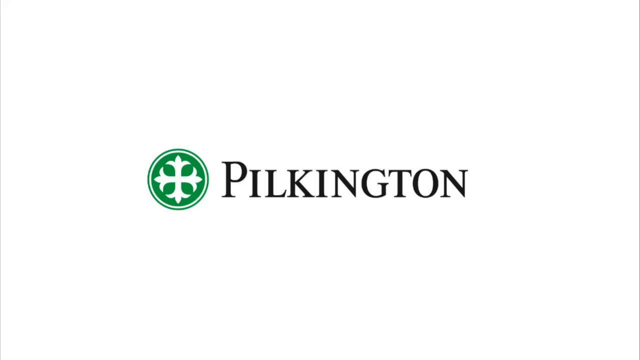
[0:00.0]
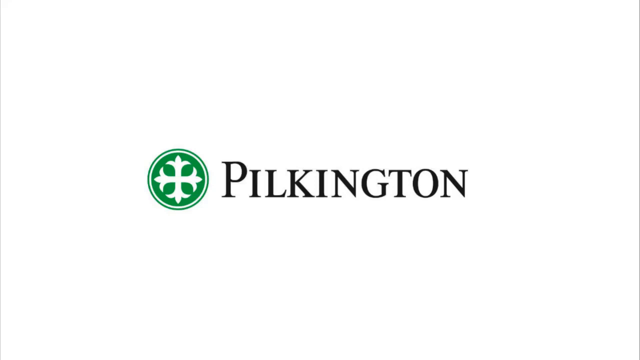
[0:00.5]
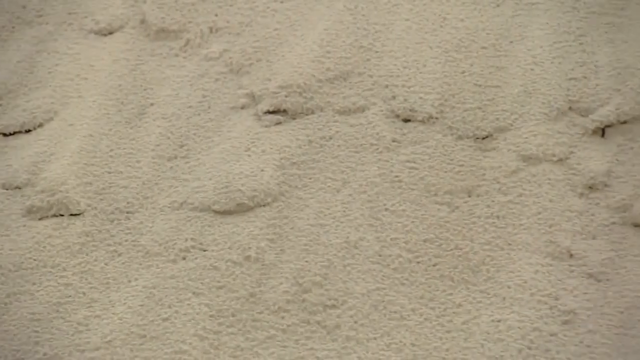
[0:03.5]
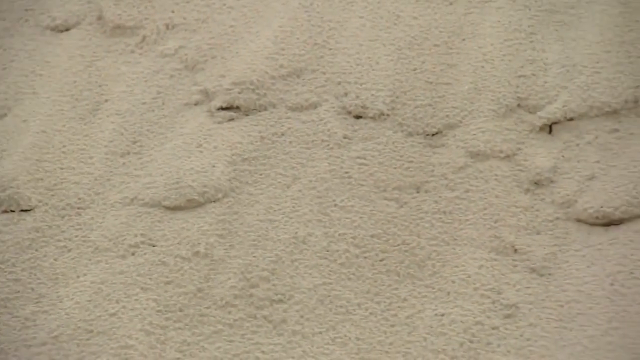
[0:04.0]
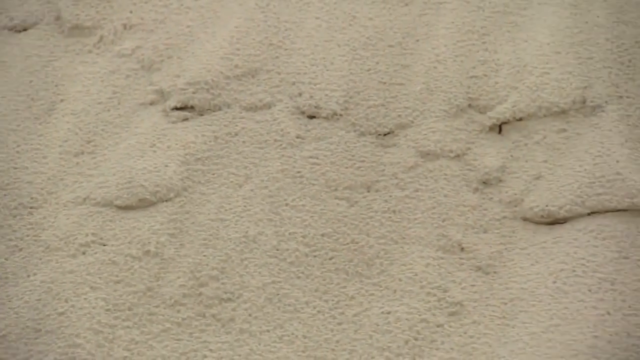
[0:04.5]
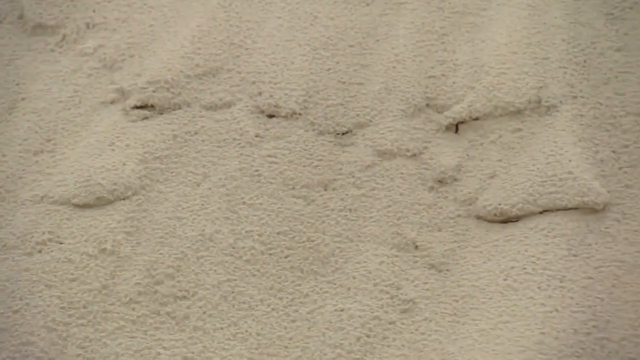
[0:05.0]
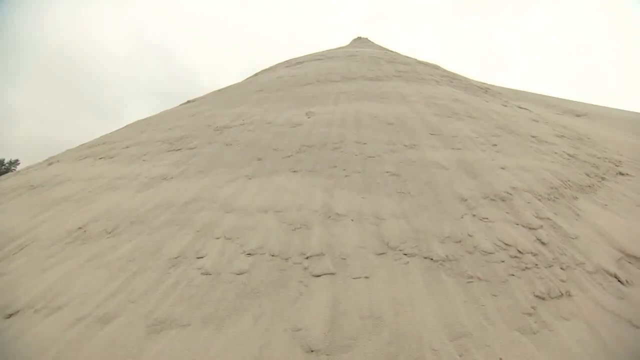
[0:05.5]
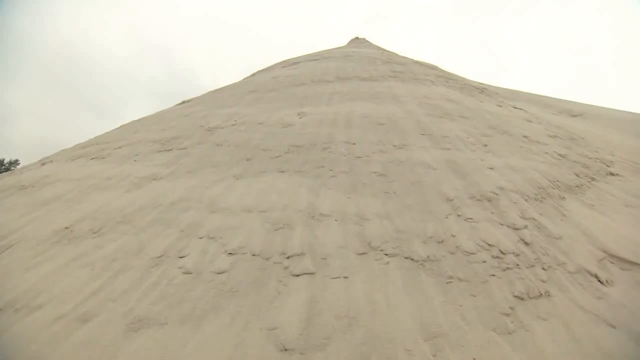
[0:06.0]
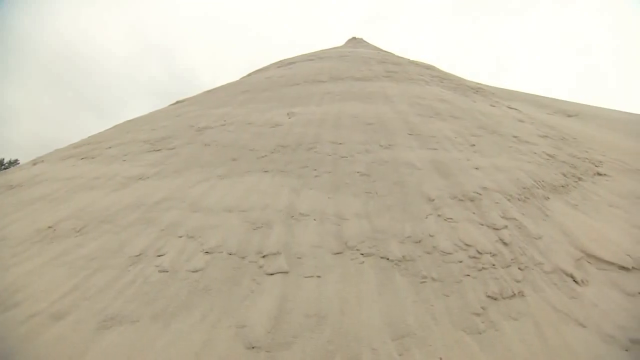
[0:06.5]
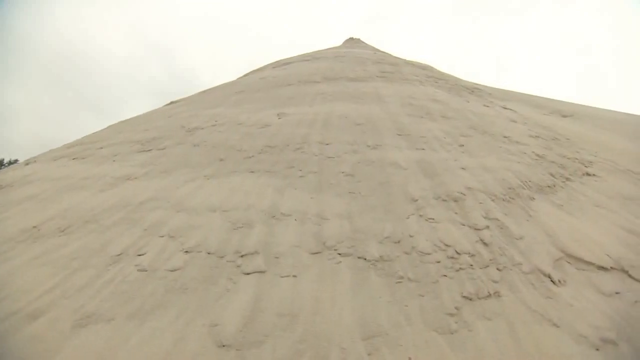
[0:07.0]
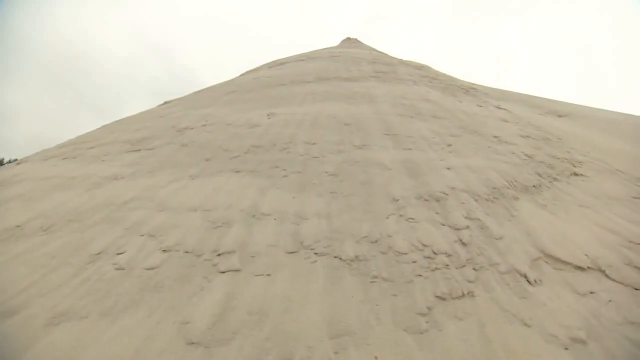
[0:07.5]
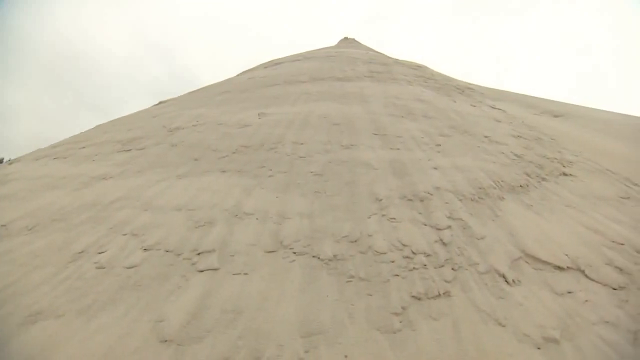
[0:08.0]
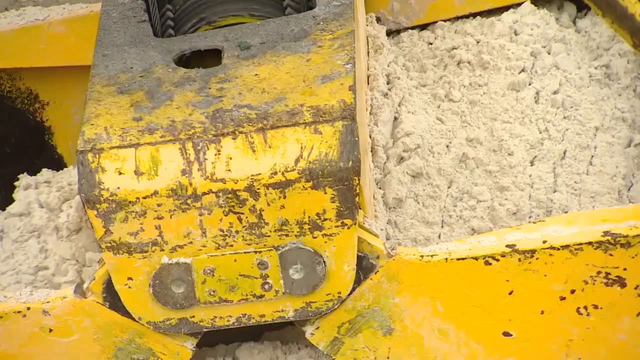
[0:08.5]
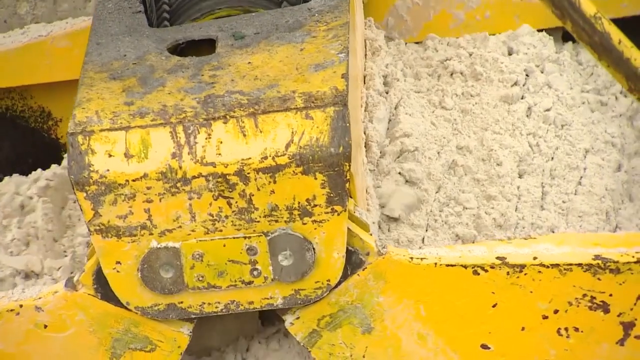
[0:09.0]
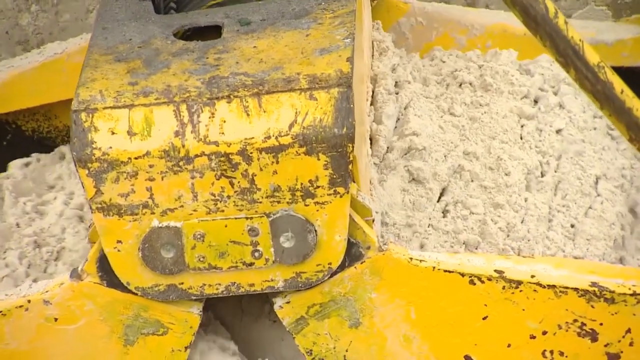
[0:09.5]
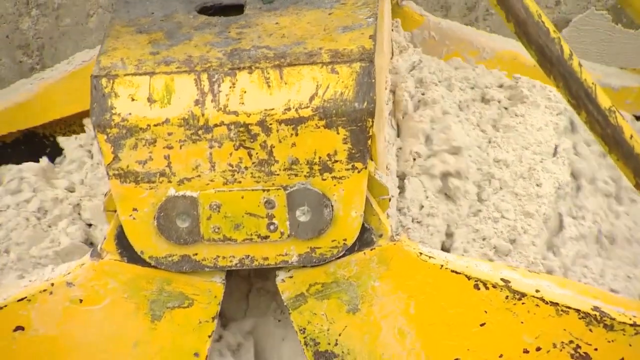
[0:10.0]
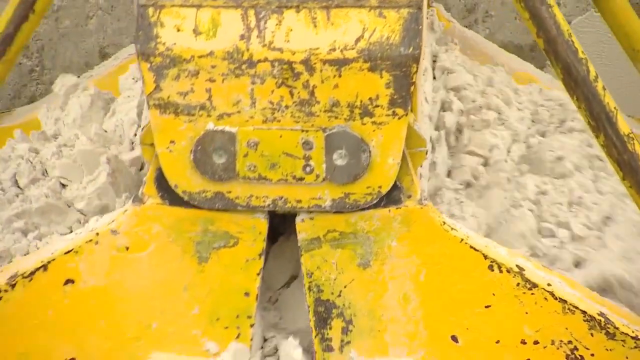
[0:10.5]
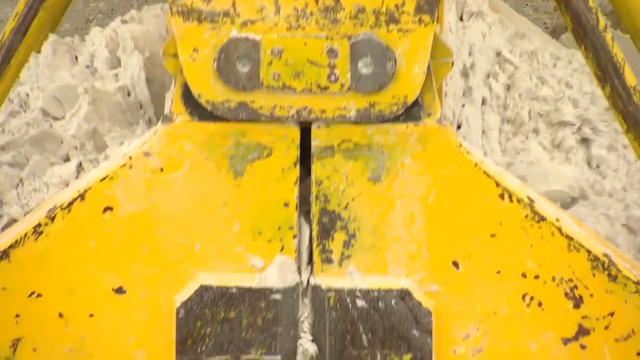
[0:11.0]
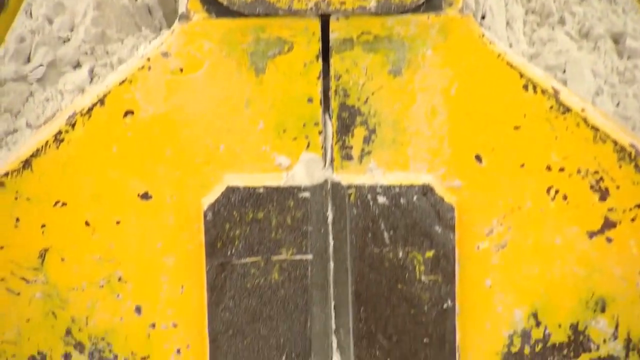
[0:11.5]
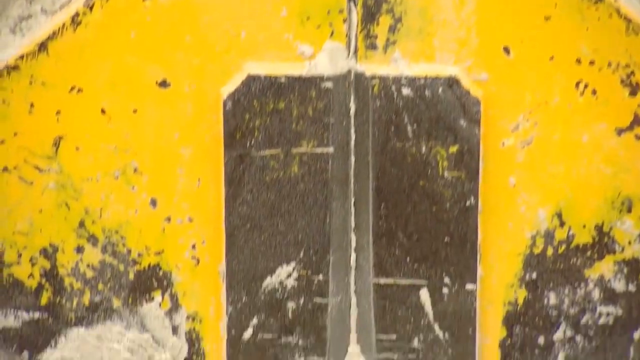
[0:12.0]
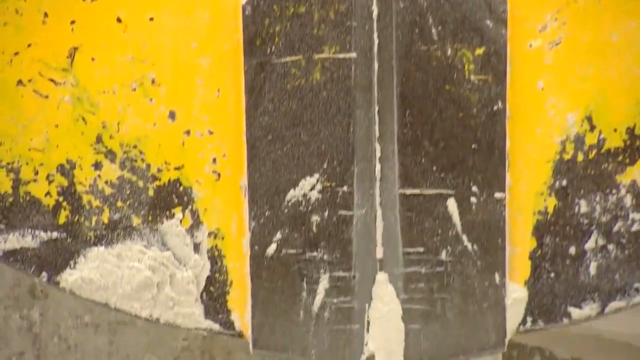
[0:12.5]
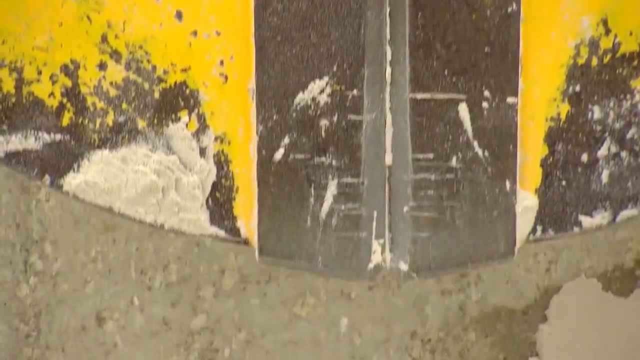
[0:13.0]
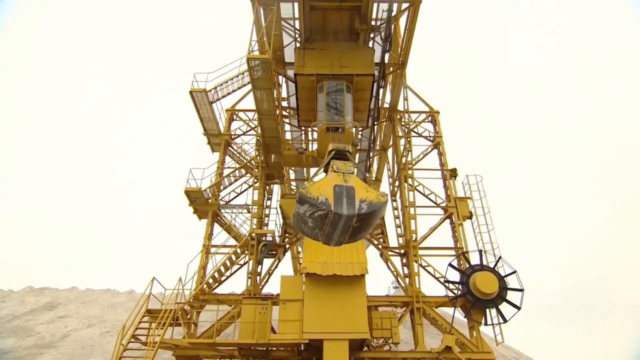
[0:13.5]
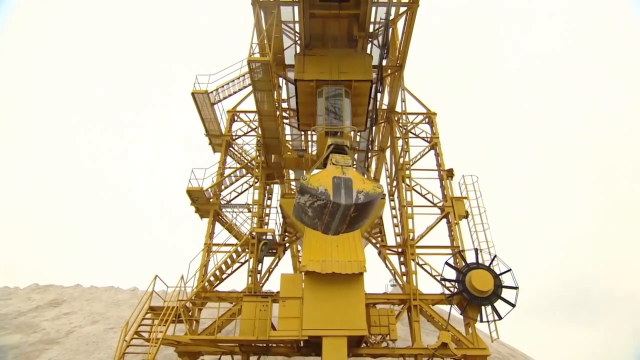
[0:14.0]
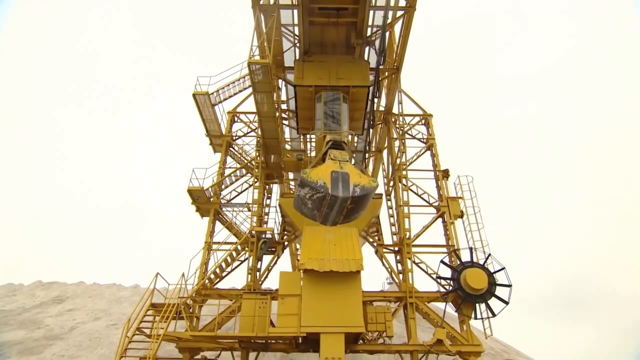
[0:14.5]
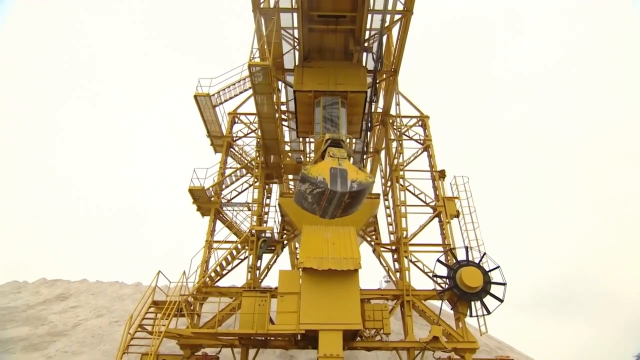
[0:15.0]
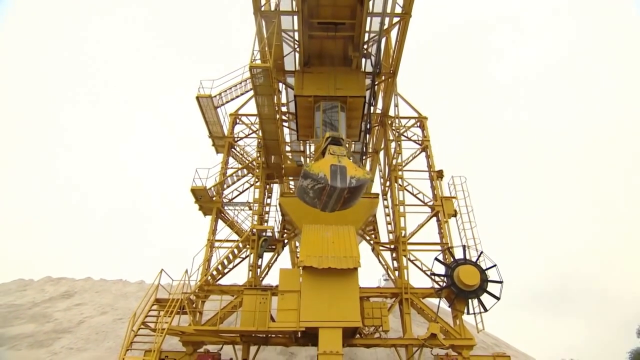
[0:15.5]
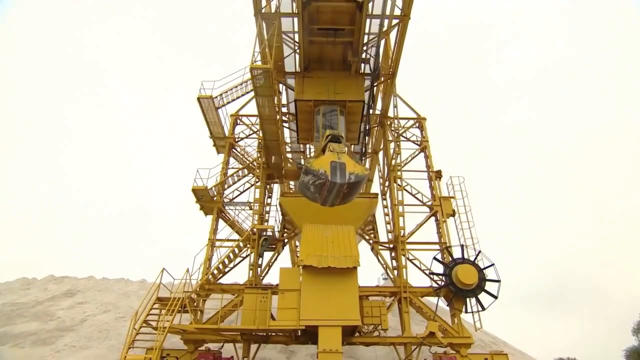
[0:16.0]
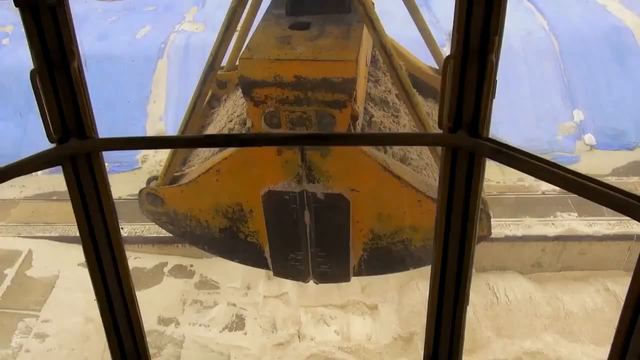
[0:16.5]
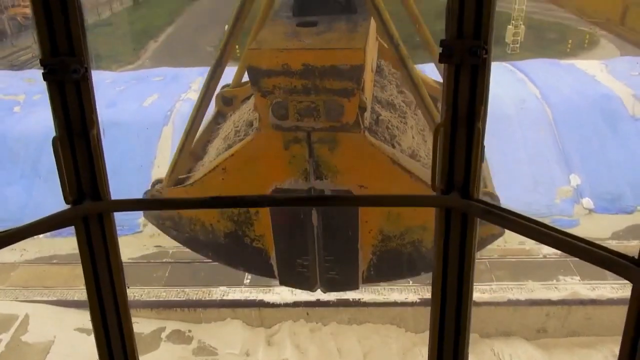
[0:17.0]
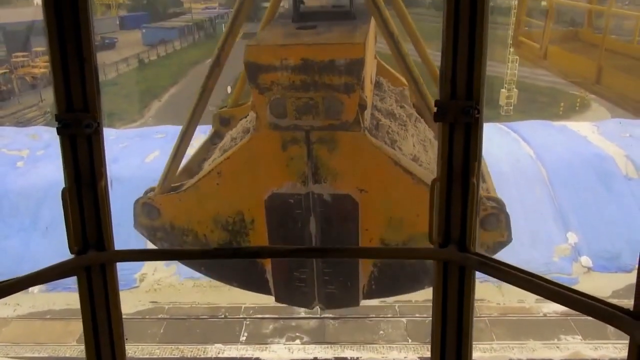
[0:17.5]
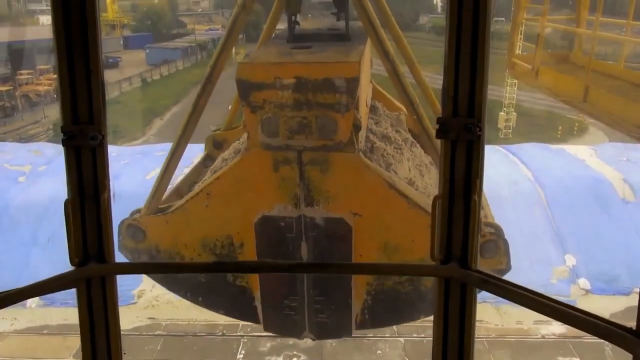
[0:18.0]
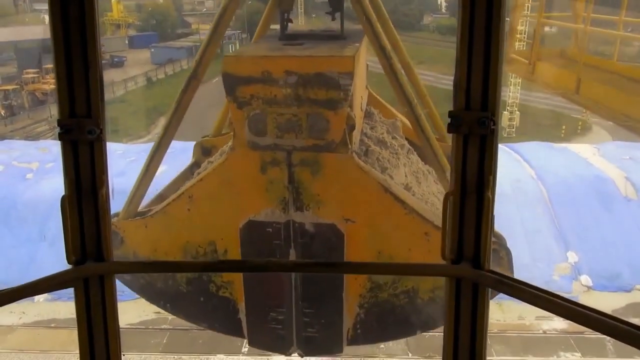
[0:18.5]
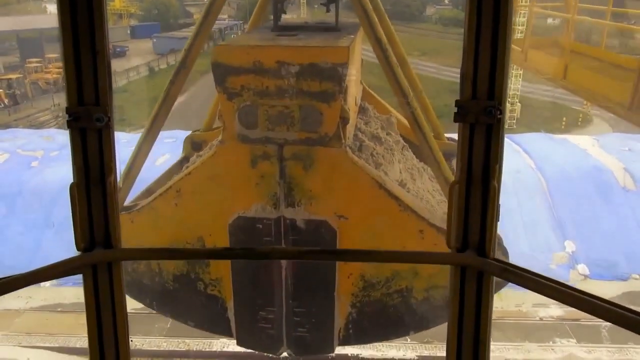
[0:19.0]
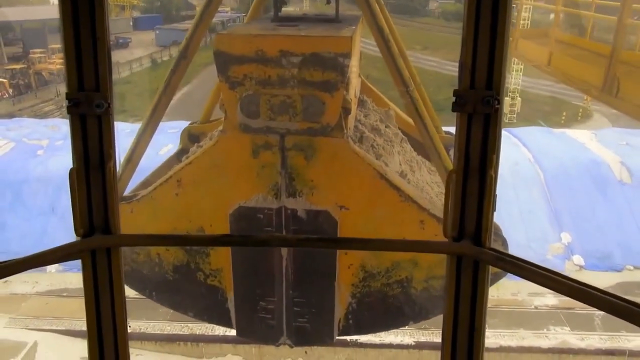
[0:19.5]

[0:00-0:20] A white background shows a green and white circular logo with a white design inside it, with black text next to the logo reading "Pilkington." The video transitions to a cinematic top shot of sand, then to the side of a very high sand mountain. A bulldozer picks up the sand into a giant yellow machinery station, and the sand is carried to the top of the station as it moves. The machinery is very large, heavy-duty and metallic, painted yellow, with long stairs attached to its sides, and it is next to the sand mountain. The sand is very heavy as the machinery pulls it with a bulldozer-like shovel into the heavy-duty machinery. The sand is then seen being carried through a moving window of the machinery.